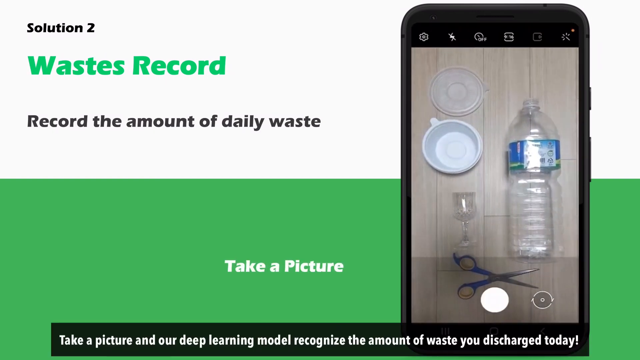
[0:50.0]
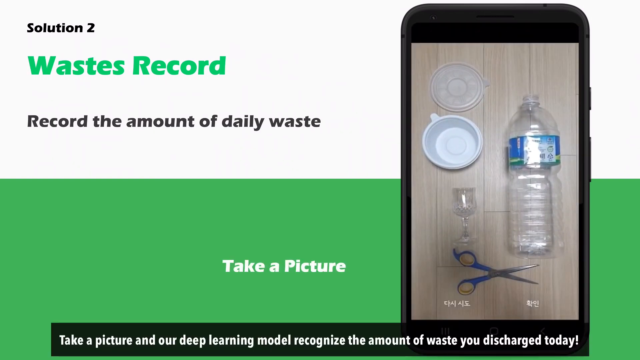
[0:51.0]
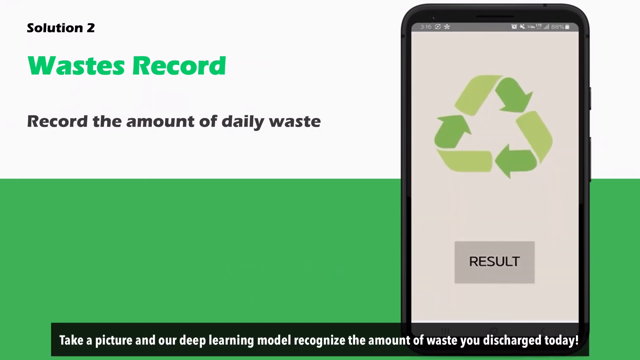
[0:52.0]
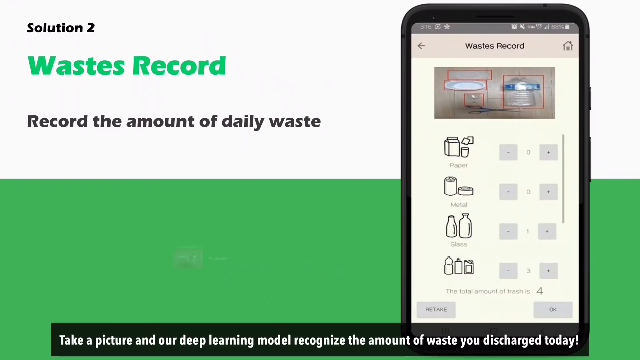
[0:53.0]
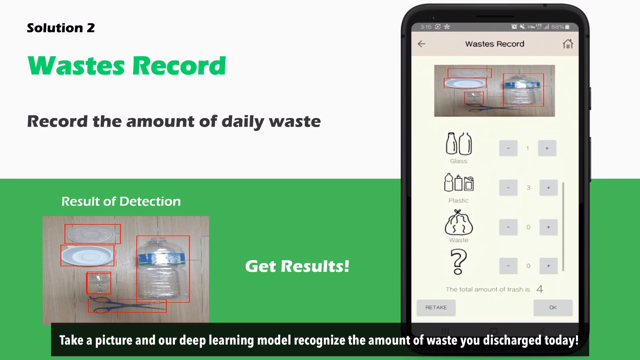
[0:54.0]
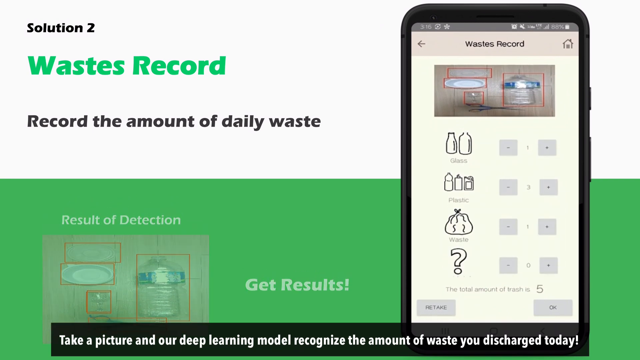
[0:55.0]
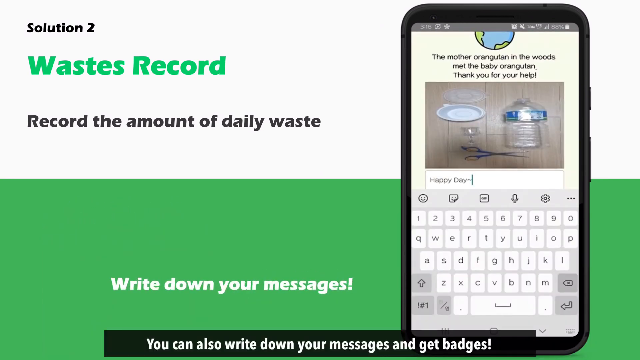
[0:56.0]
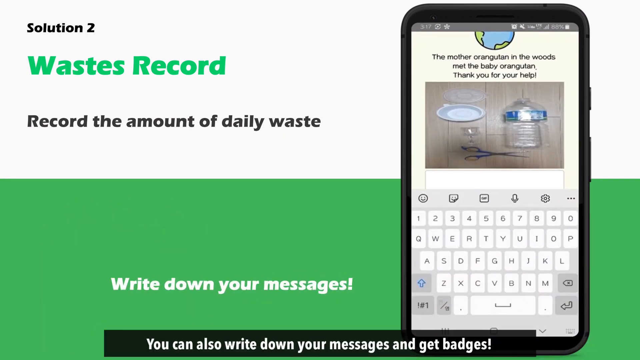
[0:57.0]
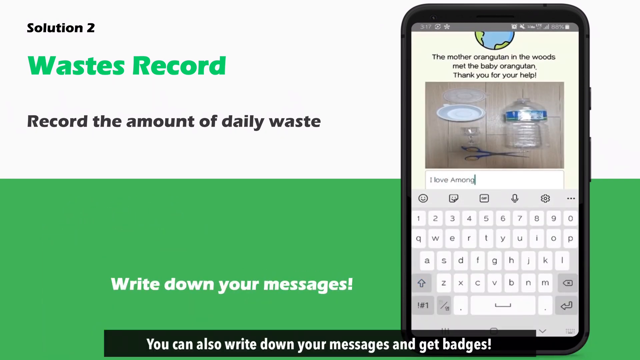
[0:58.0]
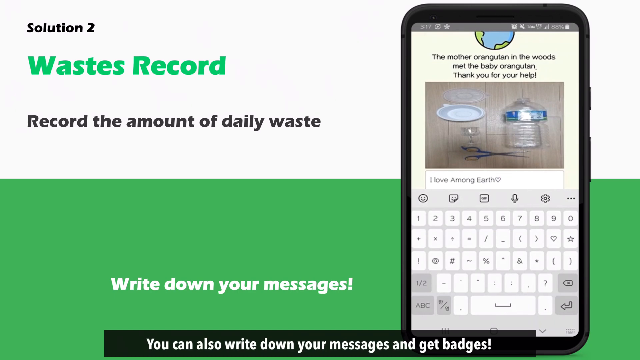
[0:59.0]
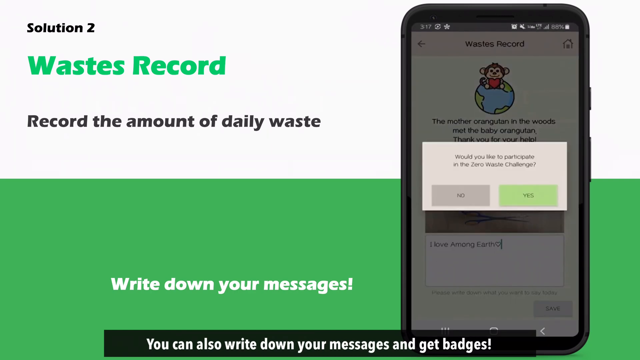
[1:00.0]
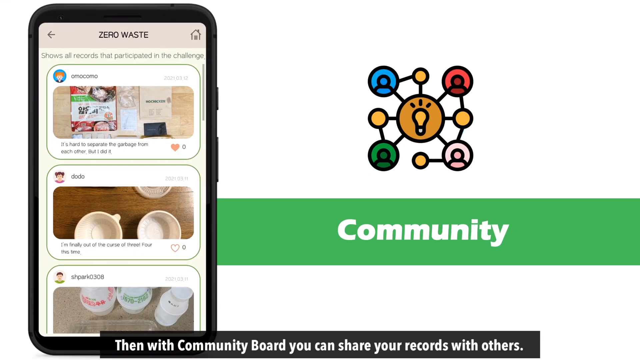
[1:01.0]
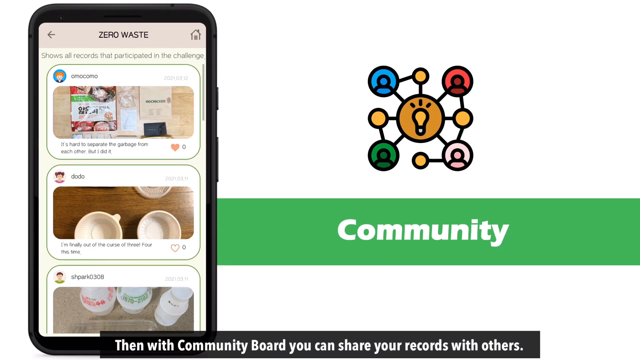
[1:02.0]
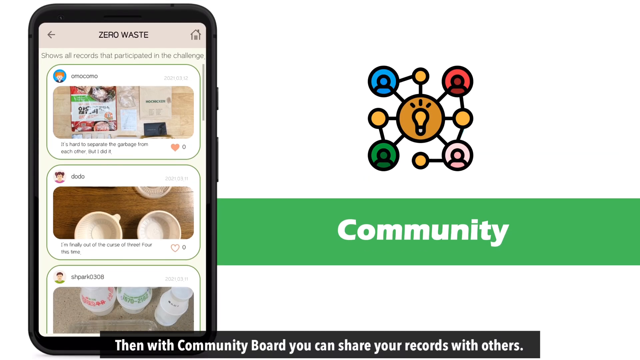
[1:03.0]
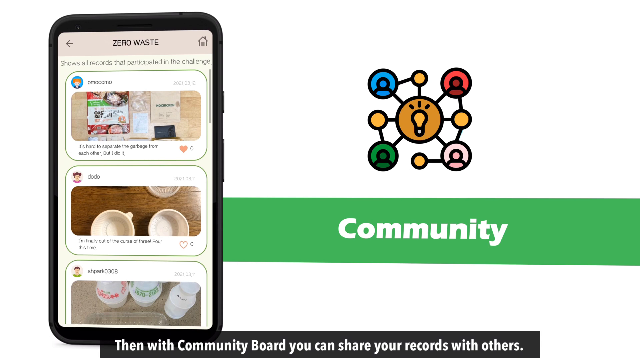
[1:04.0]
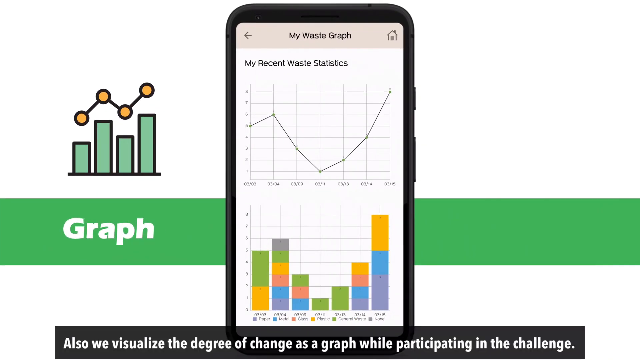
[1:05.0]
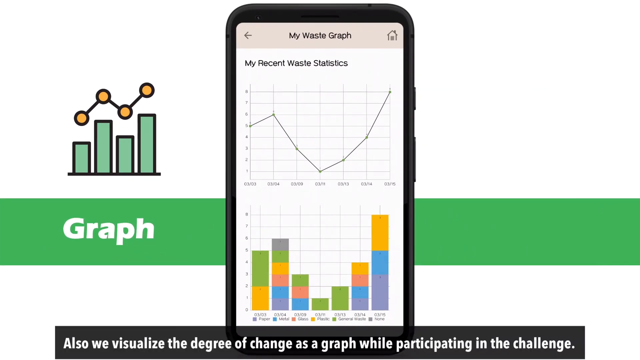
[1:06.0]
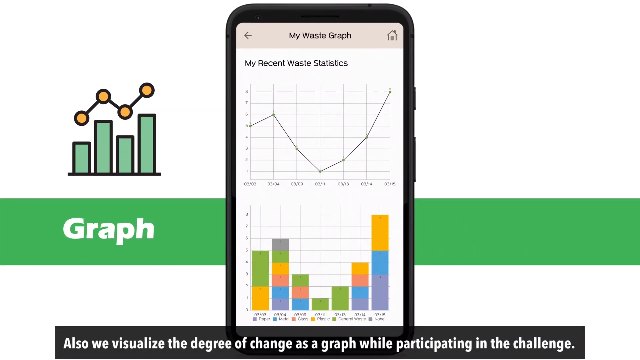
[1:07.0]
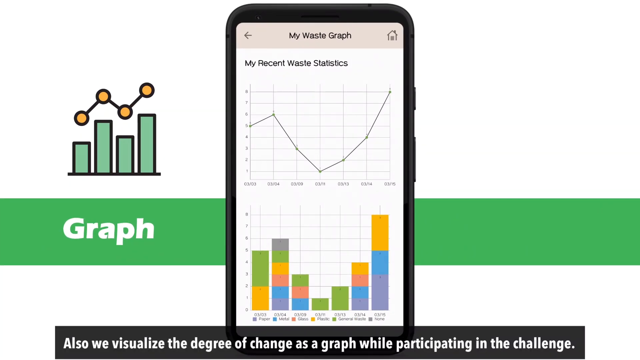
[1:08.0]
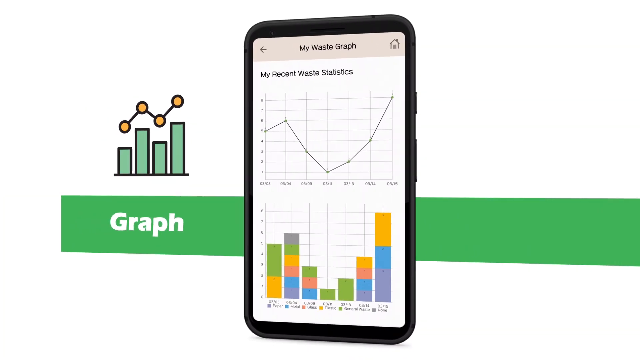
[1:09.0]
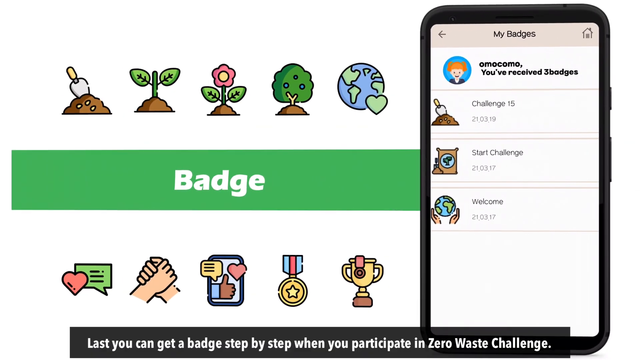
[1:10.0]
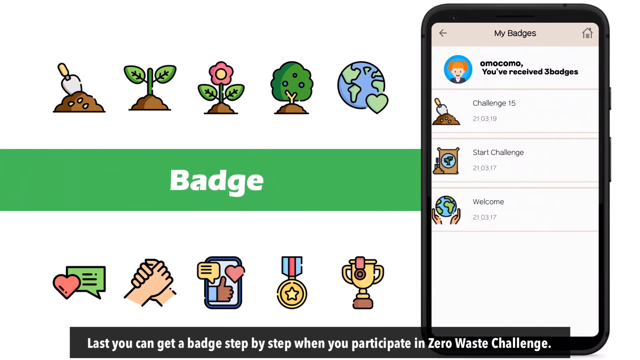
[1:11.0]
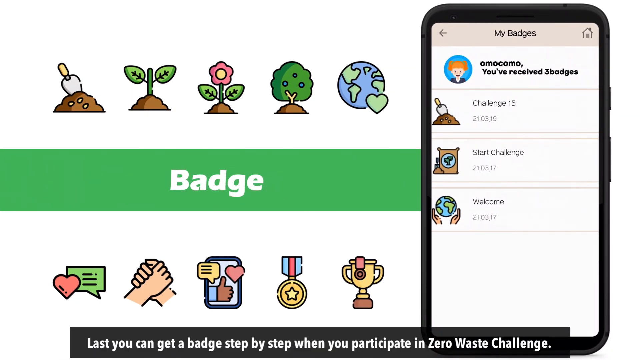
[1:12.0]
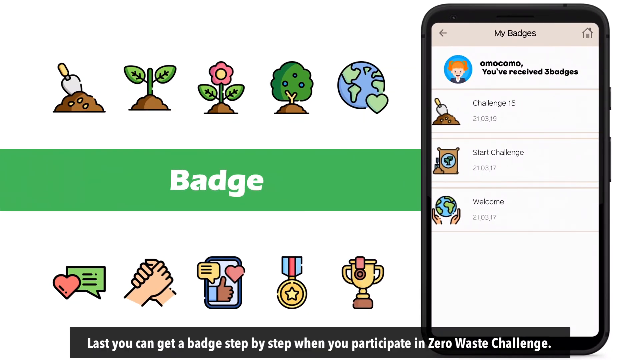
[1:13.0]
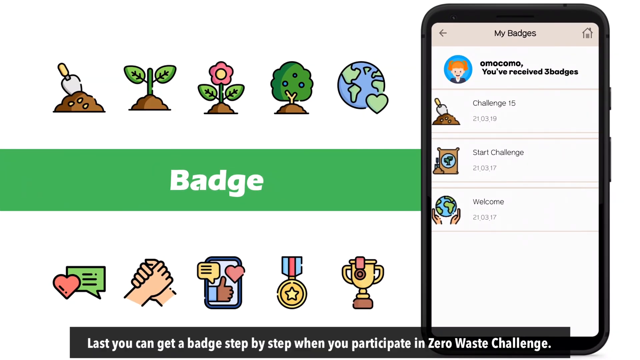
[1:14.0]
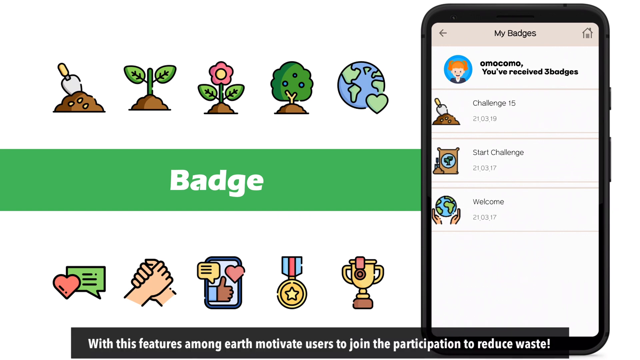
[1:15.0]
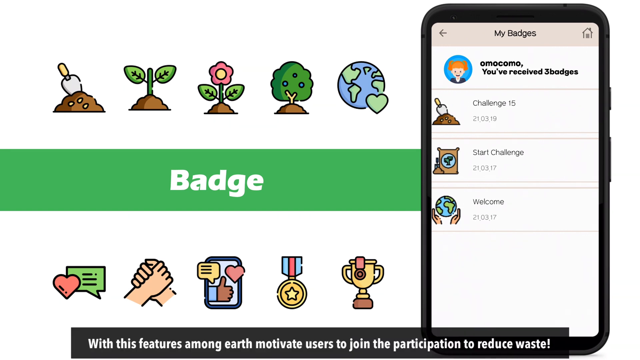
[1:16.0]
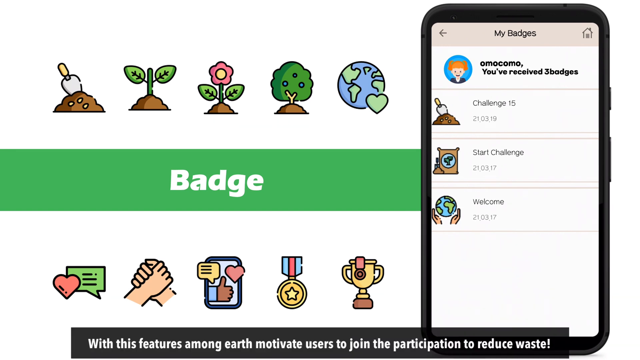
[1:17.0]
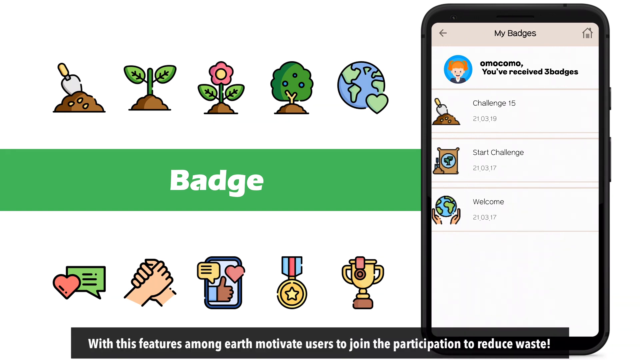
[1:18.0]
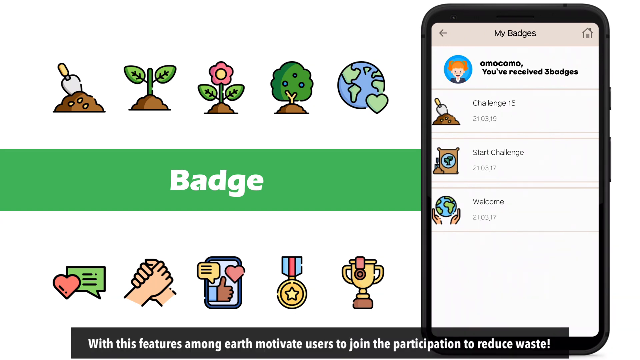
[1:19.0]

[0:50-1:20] The words "solution 2" appear, with "waste record" below in green font, then "record the amount of daily waste" below that, and "take a picture" below that in white font. To the right is an image of a phone displaying what looks to be a water bottle with a lid at its side toward the left, a cup below it, a wine glass below that, and scissors below that, all on some type of beige wood. The phone screen transitions to an image that looks to represent the recycling logo, then to another page titled "waste record" with images representing metal, glass, paper, waste and plastic, probably for a user to note what they have; it appears to be a challenge. The view pans over to another scene with the word "community", and the phone displays waste statistics and "my badges".